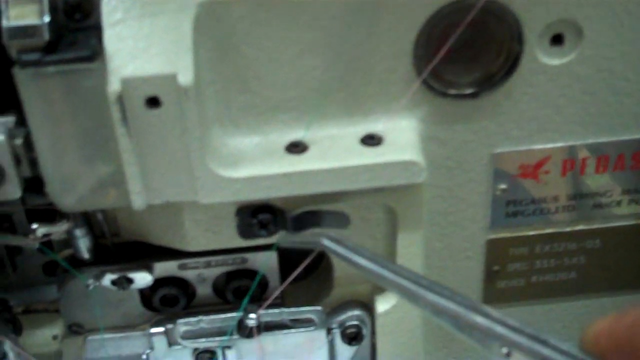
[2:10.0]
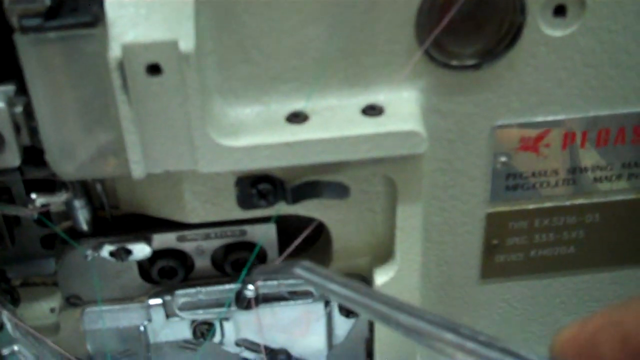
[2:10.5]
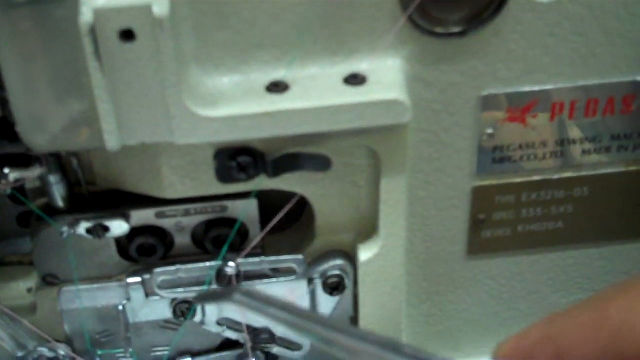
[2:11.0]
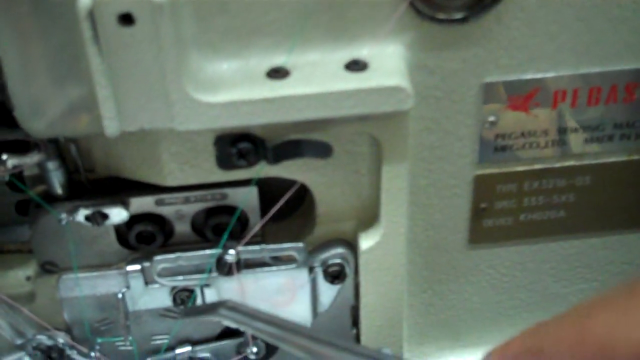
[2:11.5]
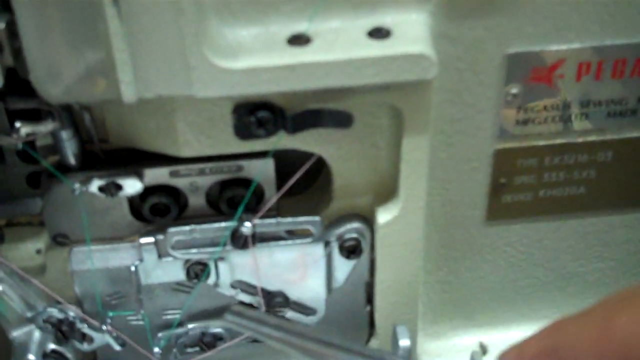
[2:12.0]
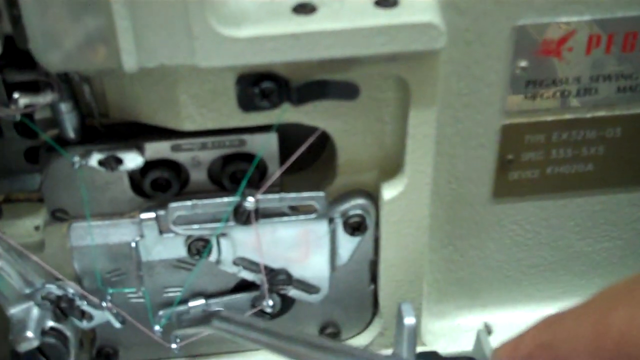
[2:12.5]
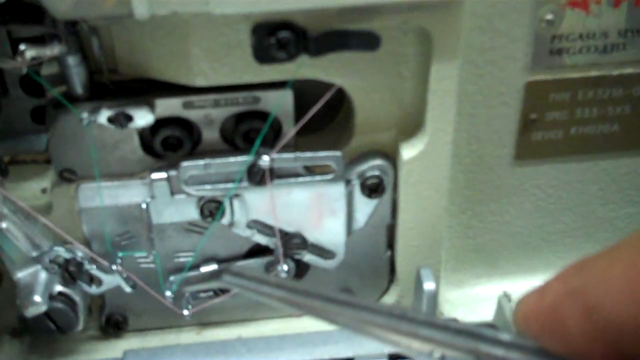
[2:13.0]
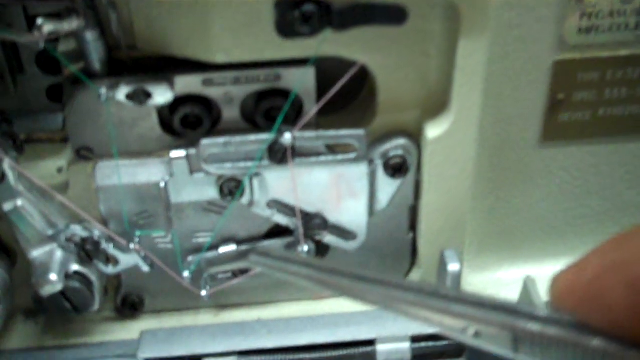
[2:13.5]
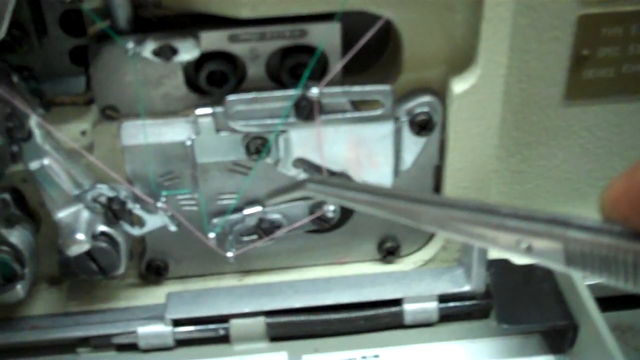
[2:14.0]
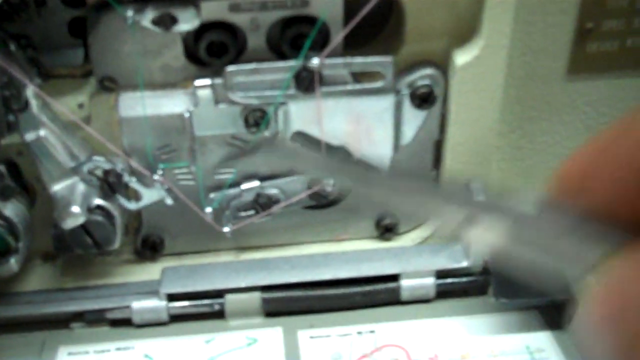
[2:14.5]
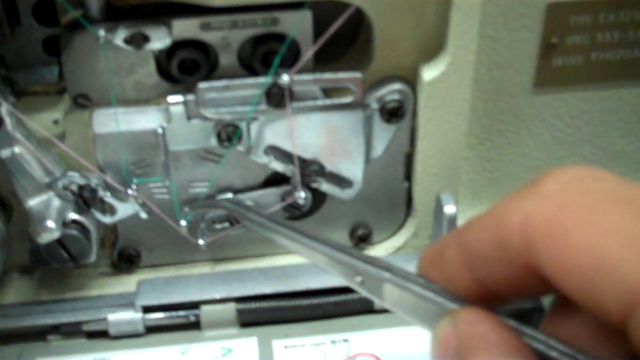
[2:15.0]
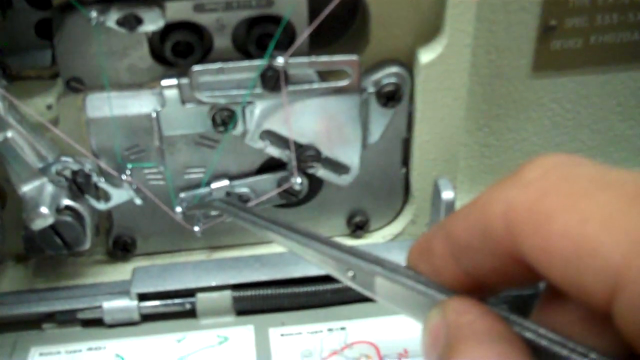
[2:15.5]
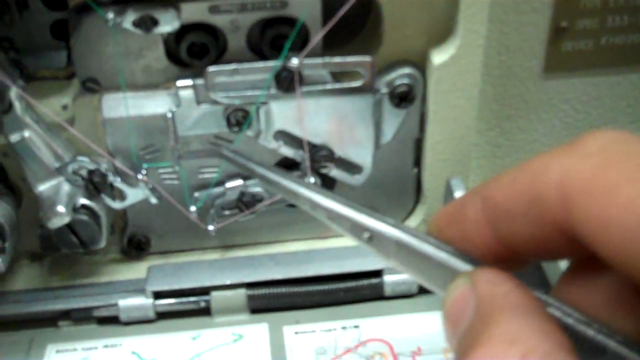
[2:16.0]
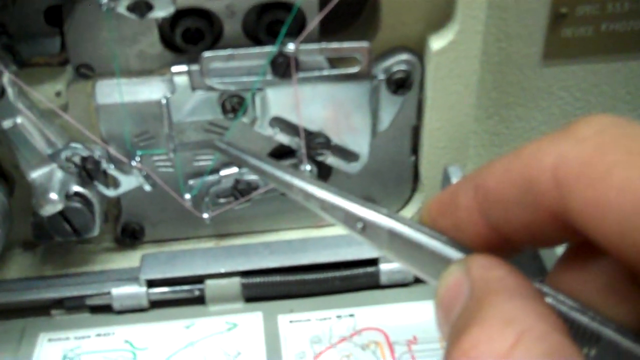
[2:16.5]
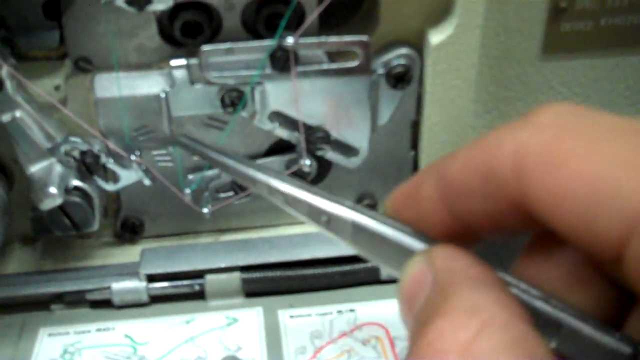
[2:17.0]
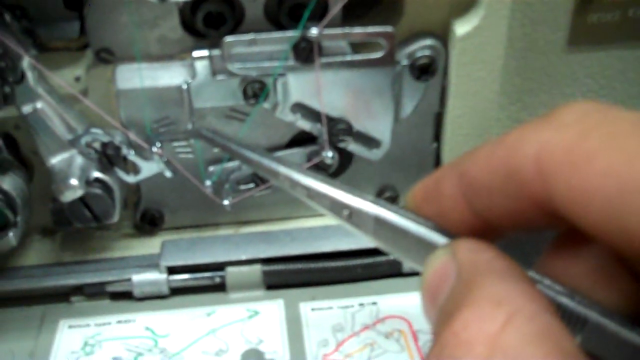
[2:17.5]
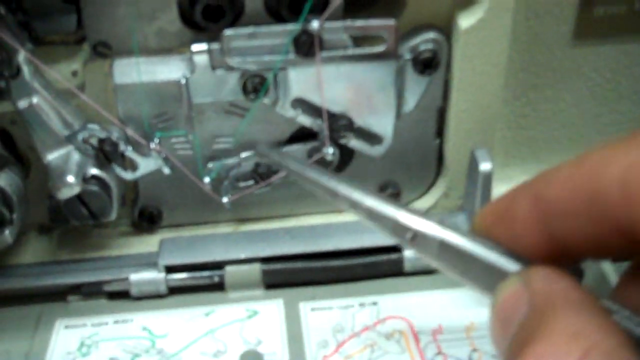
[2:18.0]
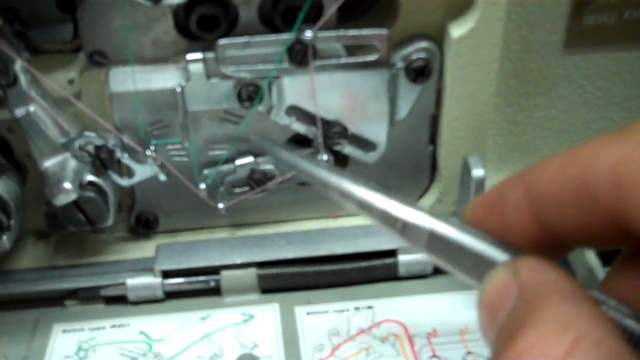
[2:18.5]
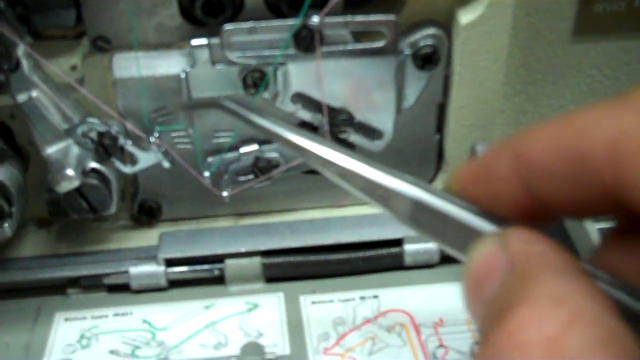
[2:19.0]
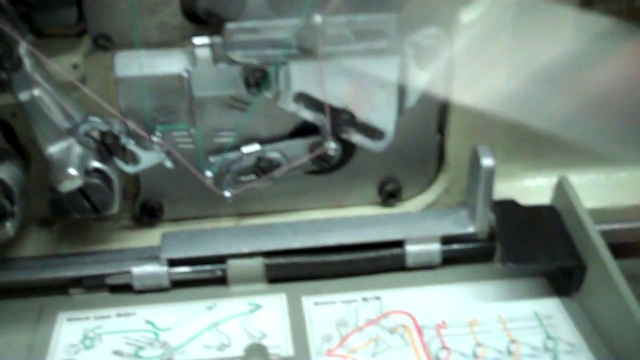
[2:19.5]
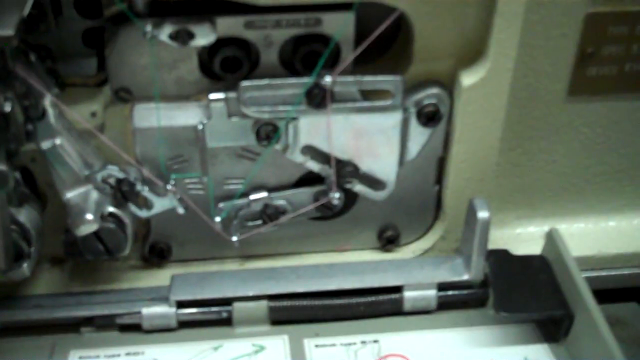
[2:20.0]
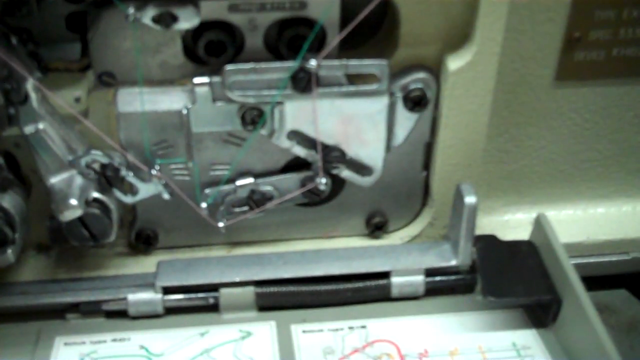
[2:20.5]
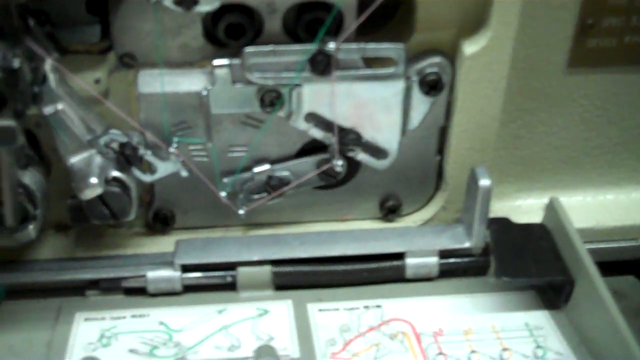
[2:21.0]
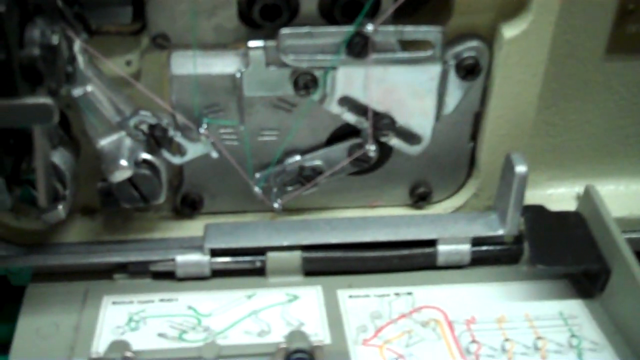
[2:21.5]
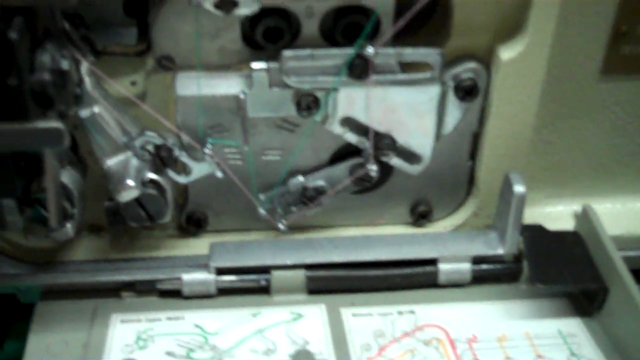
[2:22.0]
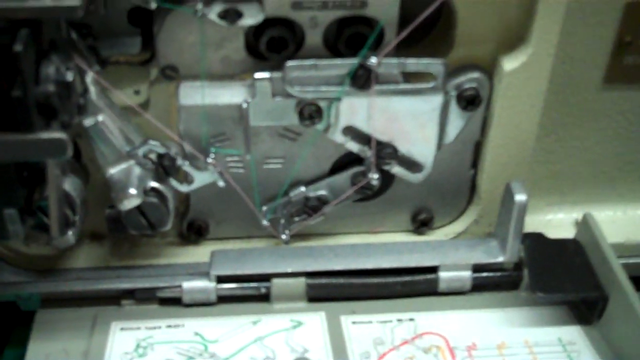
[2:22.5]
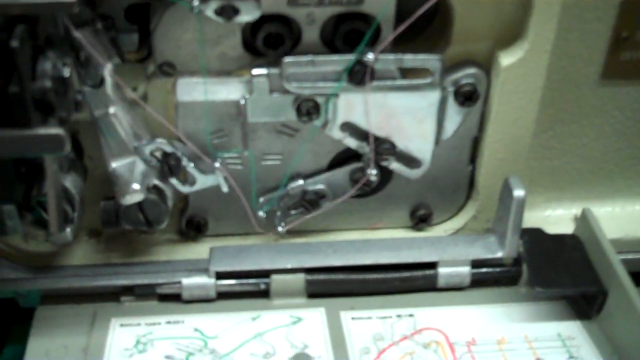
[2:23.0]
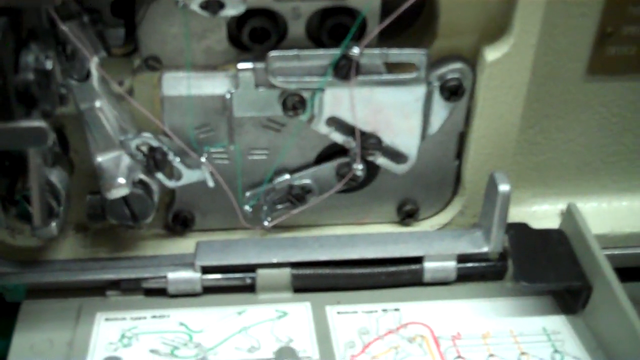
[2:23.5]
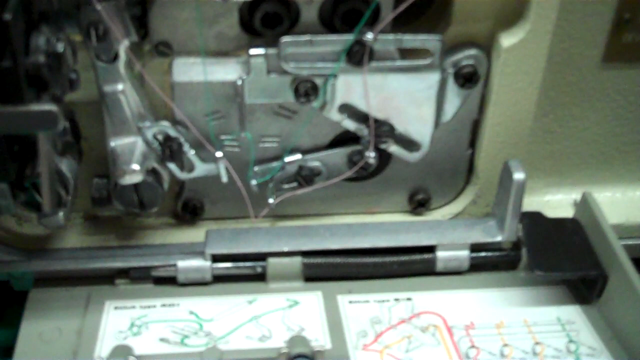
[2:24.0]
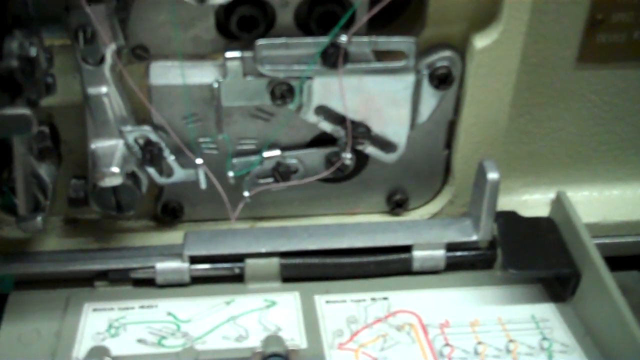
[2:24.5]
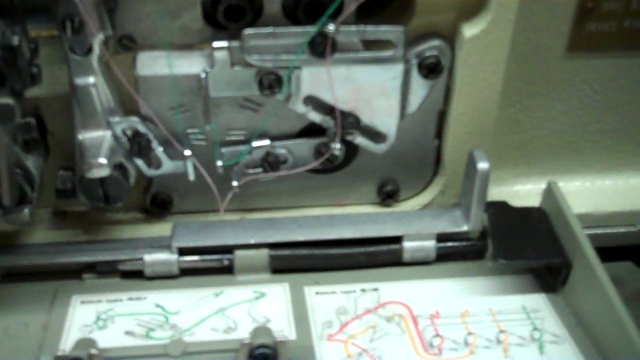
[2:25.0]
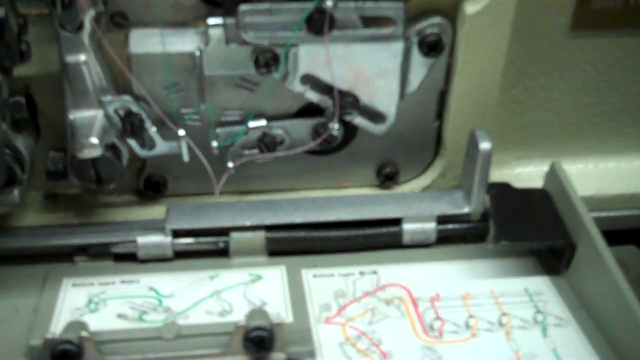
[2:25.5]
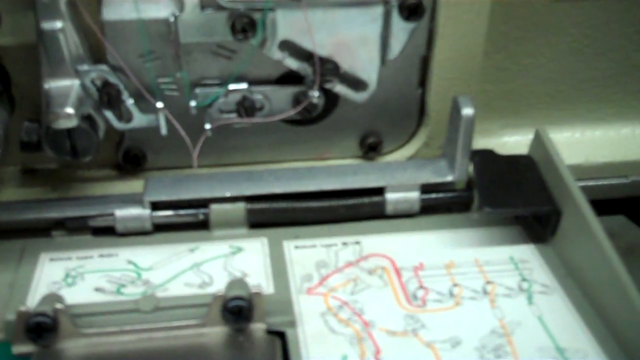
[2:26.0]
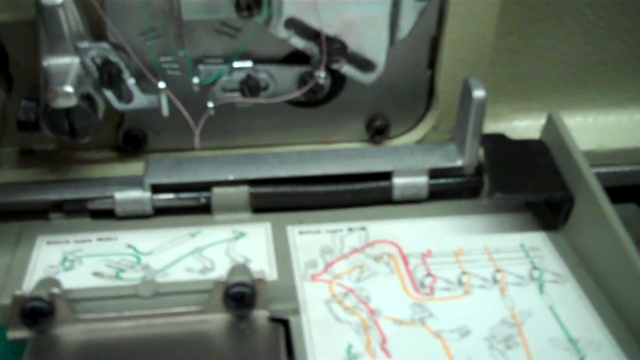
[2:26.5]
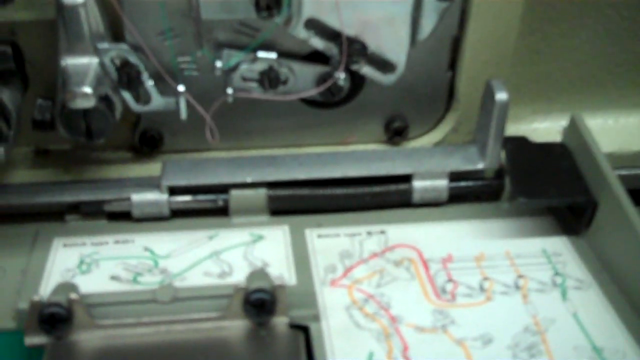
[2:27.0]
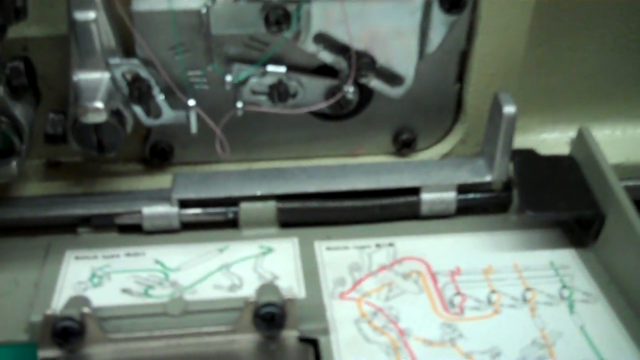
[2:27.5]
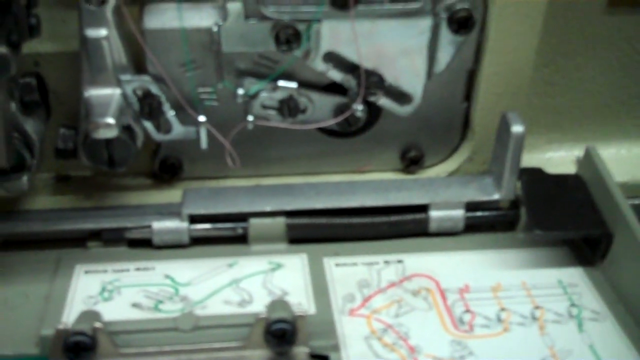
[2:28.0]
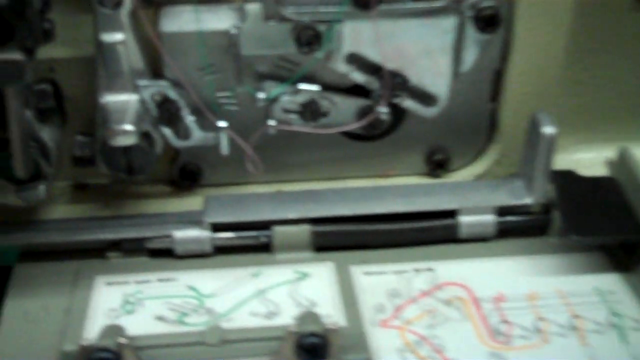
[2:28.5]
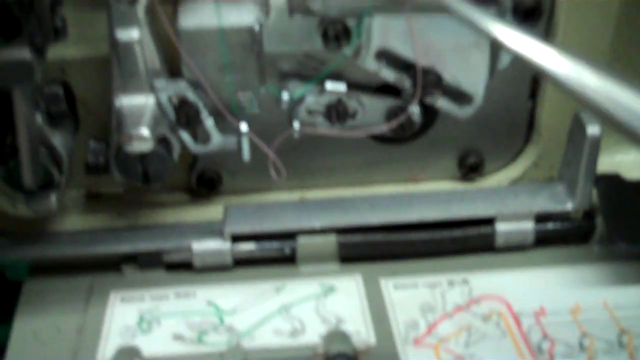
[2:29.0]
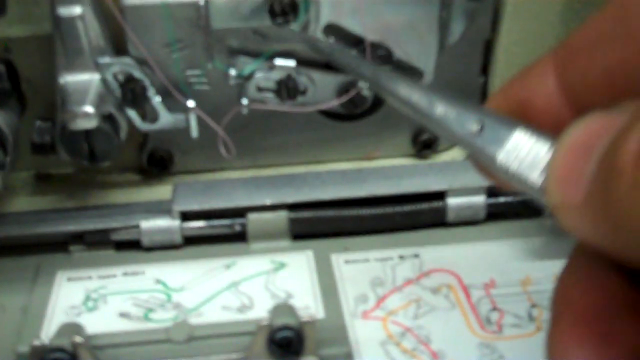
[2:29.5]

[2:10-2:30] The back of the giant sewing machine shows how the green and pink threads are intertwined. Tweezers follow the path of the green thread, then point to the different spots where it is connected. Near the bottom, the green thread is connected in a stair-step style. The pink thread is connected in a similar manner, following the outline of the green thread, but to different metal parts. A small metal arm on the machine starts to move, causing the pink thread to move, and a larger arm on the left side, also attached to the pink thread, starts to move too. A loop forms in the pink thread. Tweezers get ready to make adjustments to the threads.